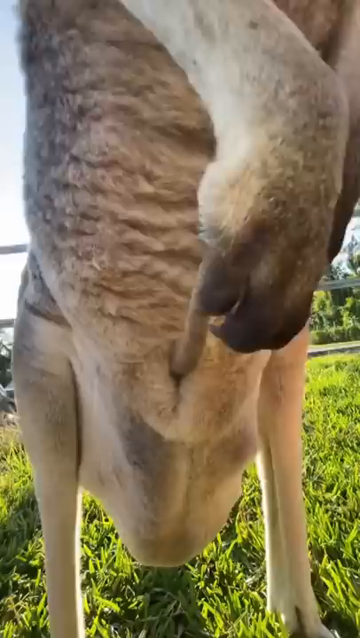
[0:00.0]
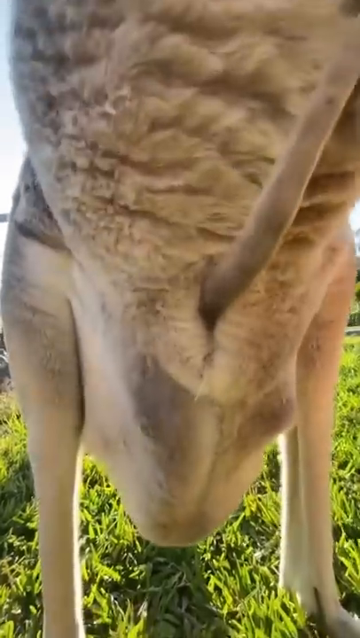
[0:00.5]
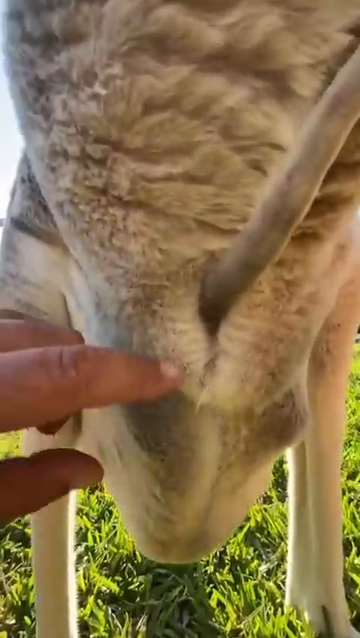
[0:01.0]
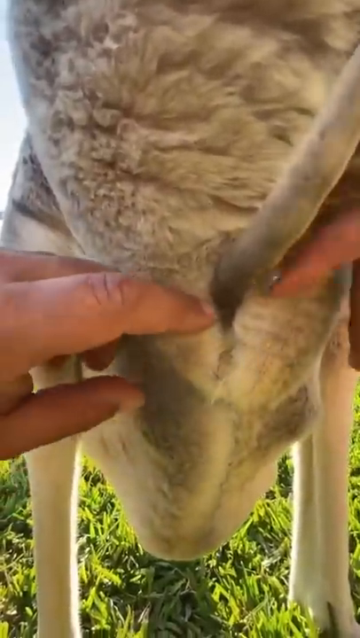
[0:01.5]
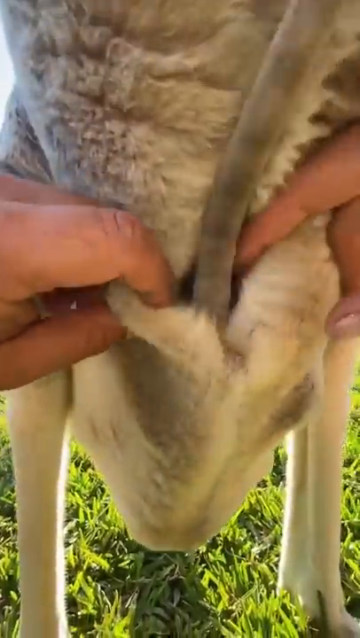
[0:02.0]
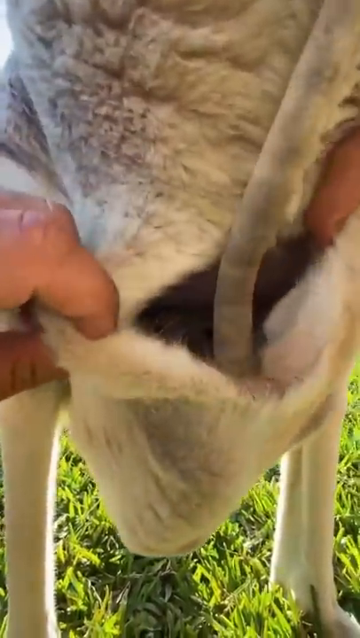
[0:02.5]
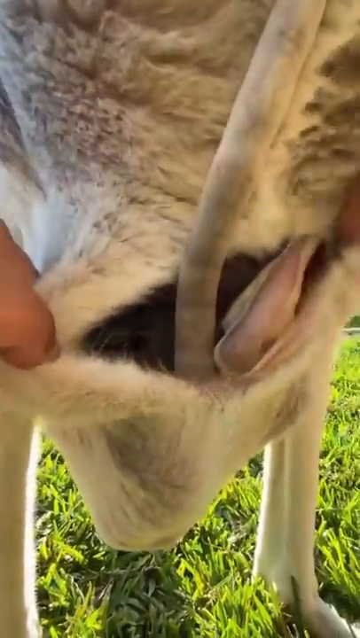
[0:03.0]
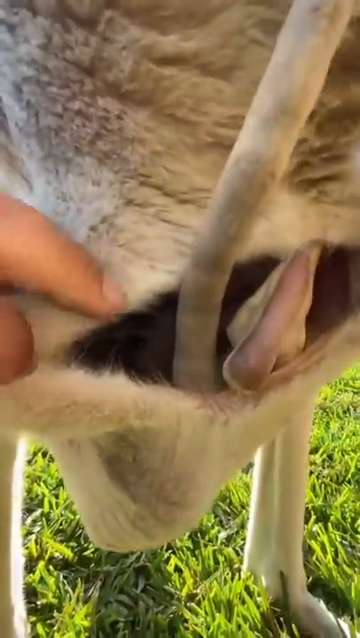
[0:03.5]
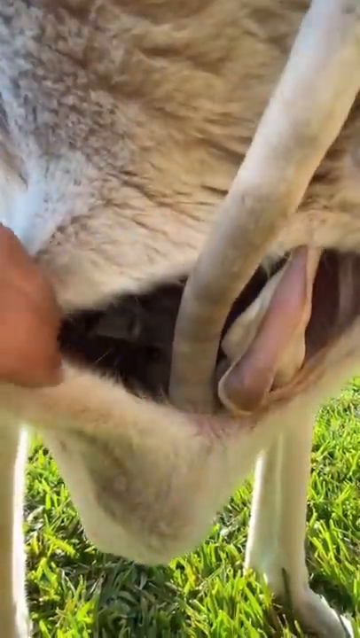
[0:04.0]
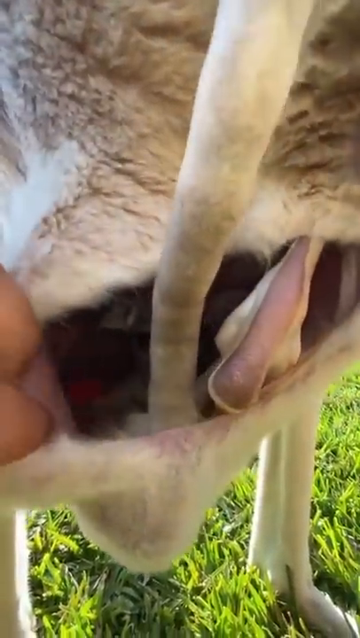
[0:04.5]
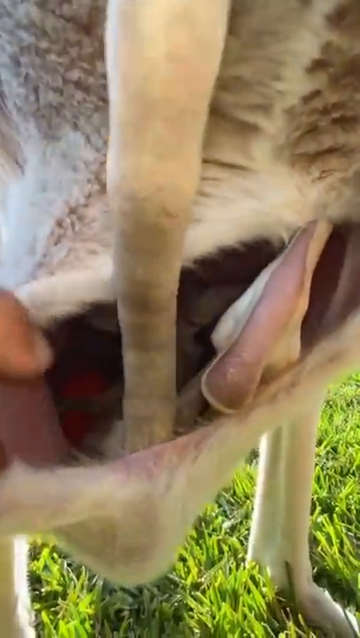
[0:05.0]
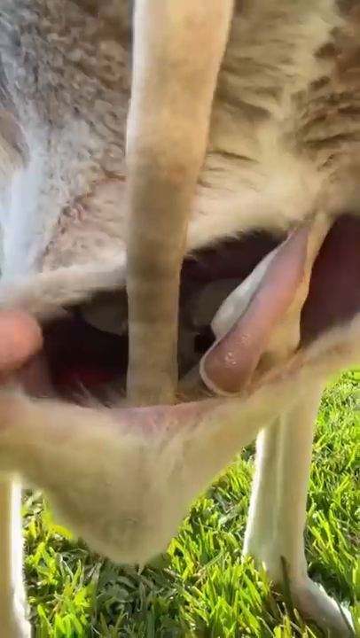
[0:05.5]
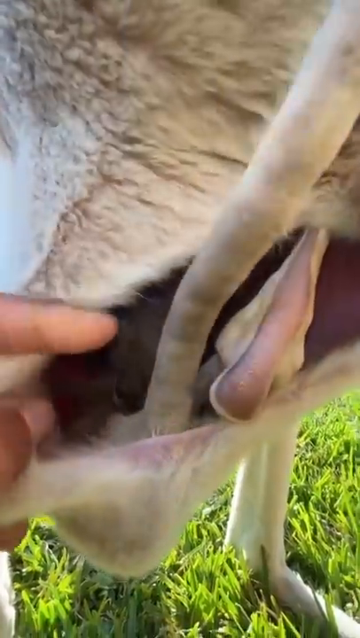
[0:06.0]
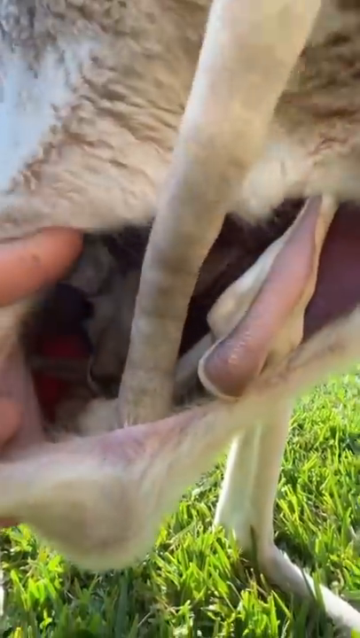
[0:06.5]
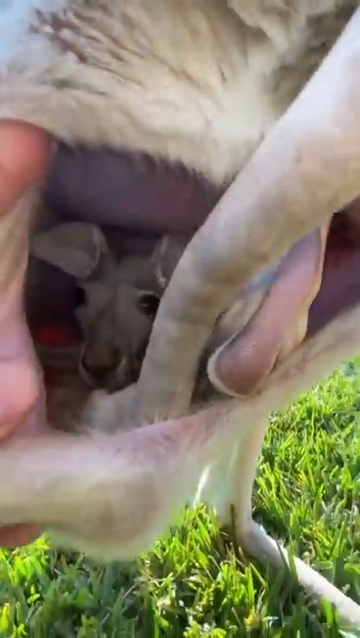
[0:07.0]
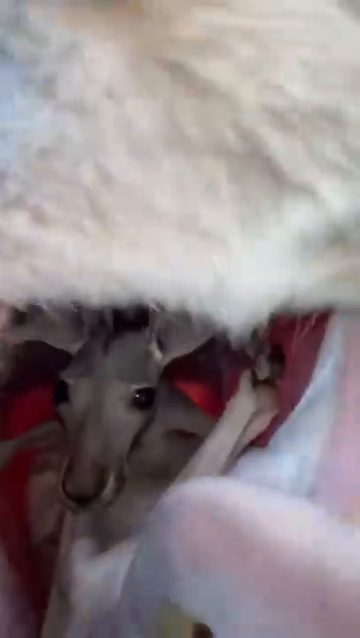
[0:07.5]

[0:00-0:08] A kangaroo is shown. Someone appears to be peeking into the pouch of the female kangaroo and finds a little baby kangaroo inside. The baby kangaroo is sleeping soundly inside its mother's pouch. The mother seems oddly calm and uninterested while a human opens her pouch to peek at her small baby. She is grayish and white in color, and her fur looks very fluffy. She stays very calm as the man opens her pouch and peeks in at the baby.